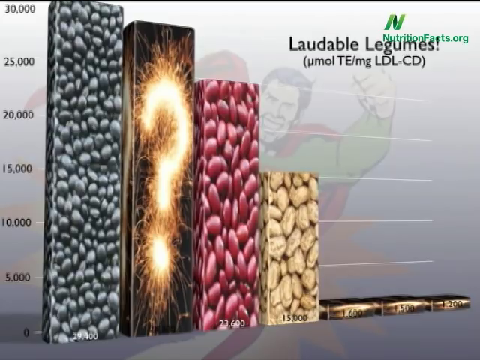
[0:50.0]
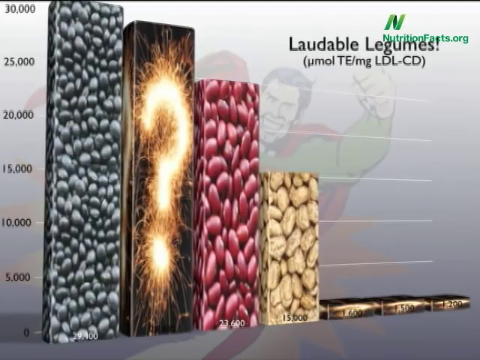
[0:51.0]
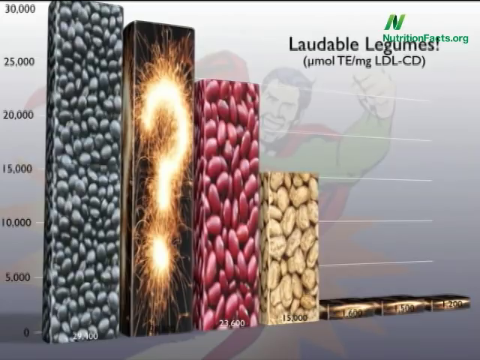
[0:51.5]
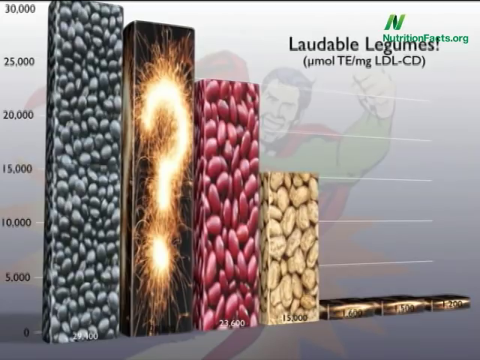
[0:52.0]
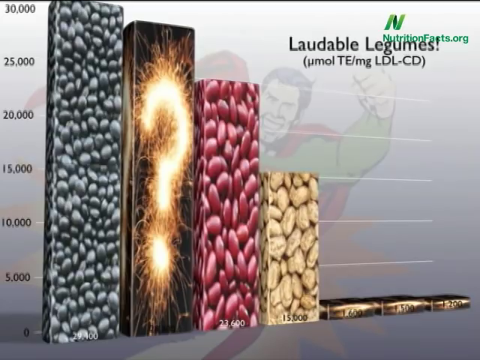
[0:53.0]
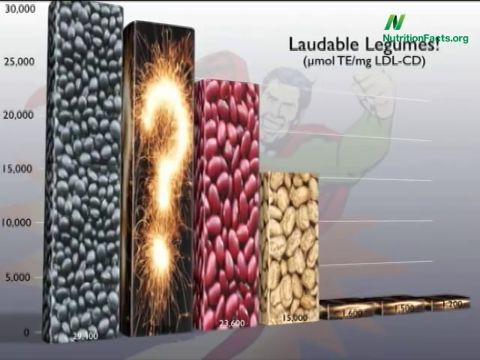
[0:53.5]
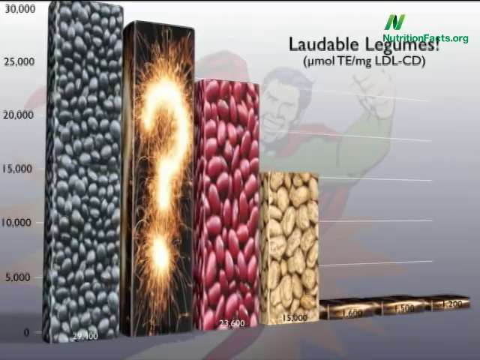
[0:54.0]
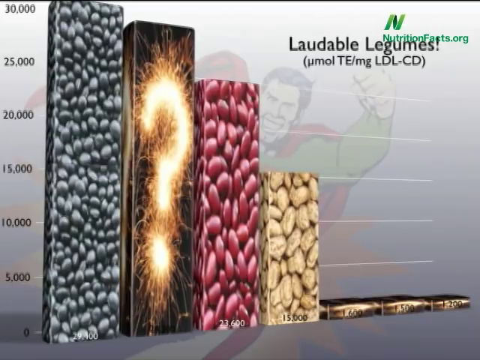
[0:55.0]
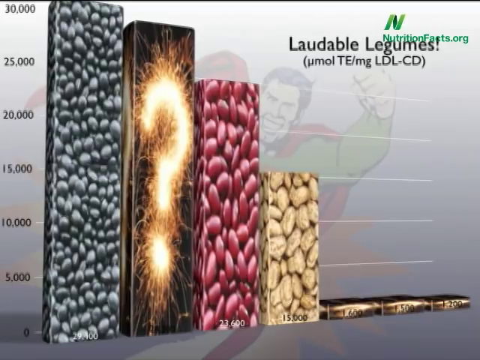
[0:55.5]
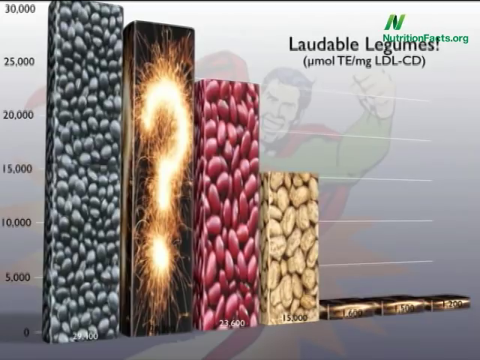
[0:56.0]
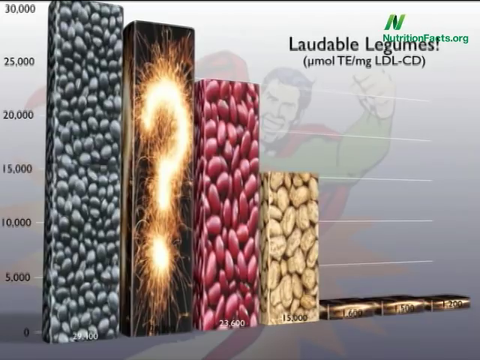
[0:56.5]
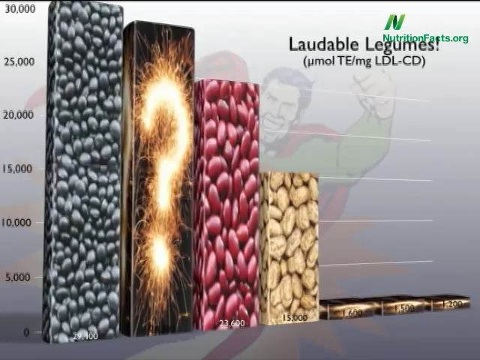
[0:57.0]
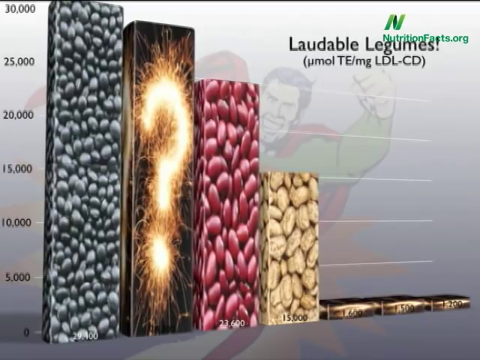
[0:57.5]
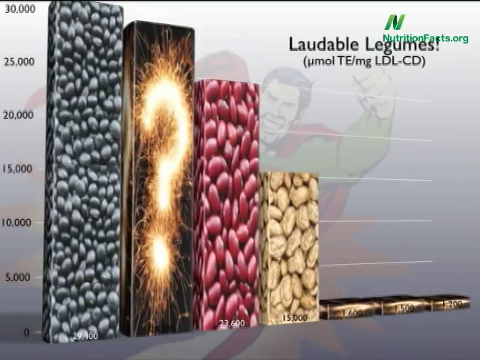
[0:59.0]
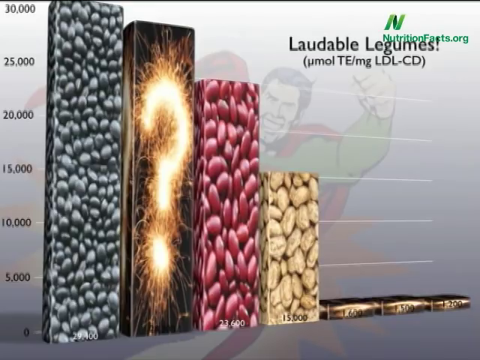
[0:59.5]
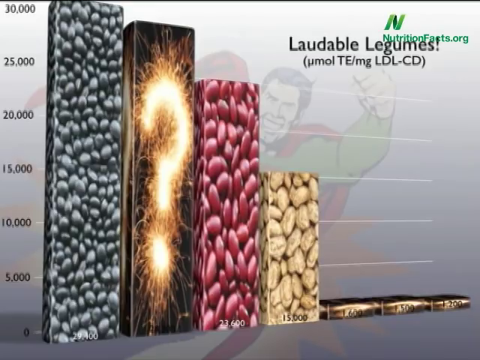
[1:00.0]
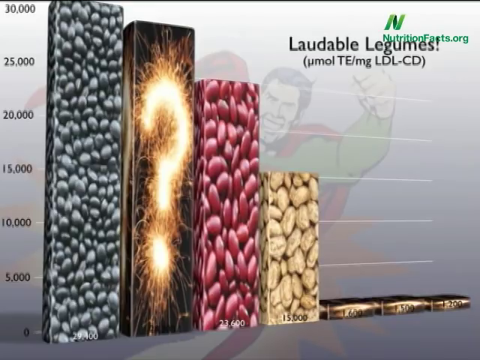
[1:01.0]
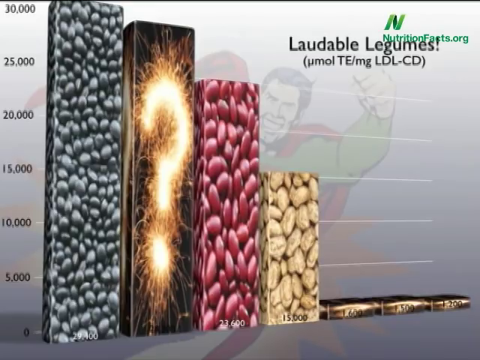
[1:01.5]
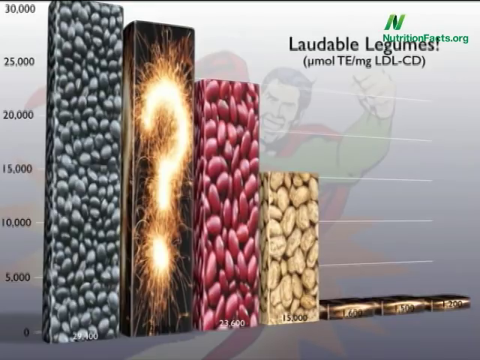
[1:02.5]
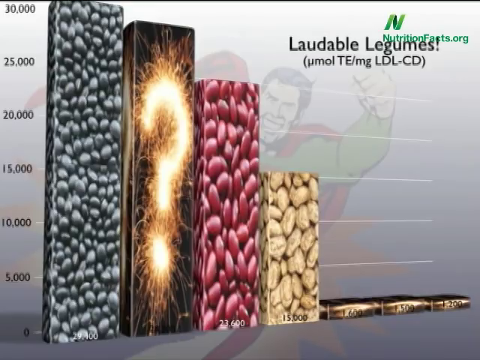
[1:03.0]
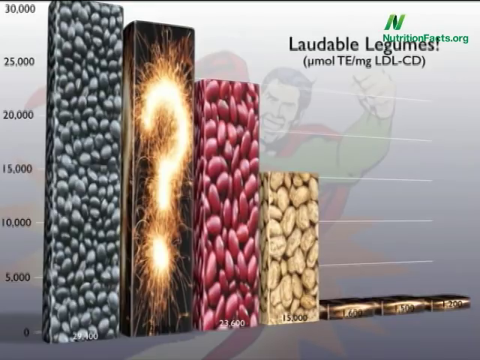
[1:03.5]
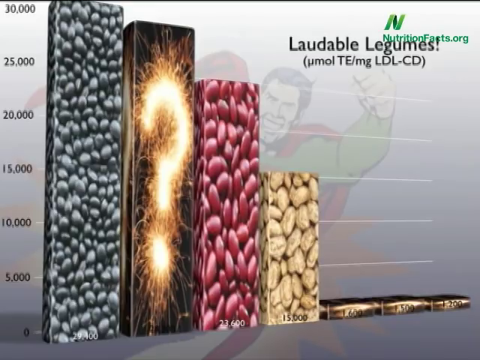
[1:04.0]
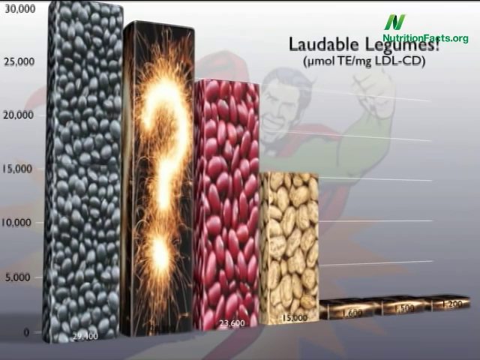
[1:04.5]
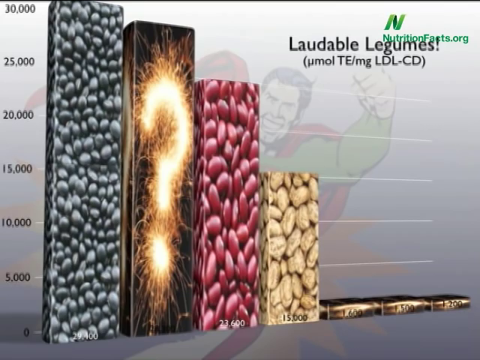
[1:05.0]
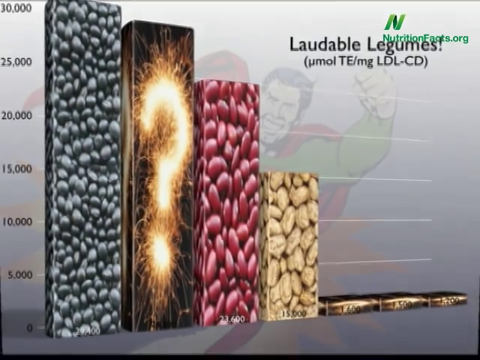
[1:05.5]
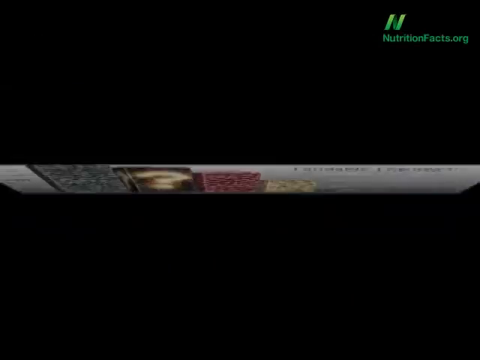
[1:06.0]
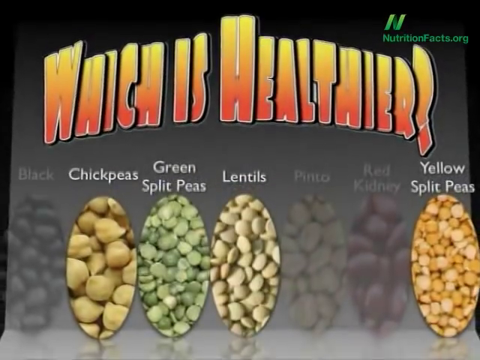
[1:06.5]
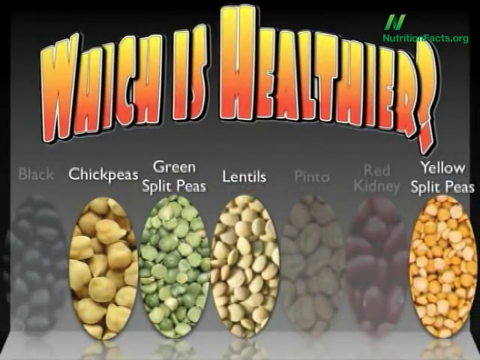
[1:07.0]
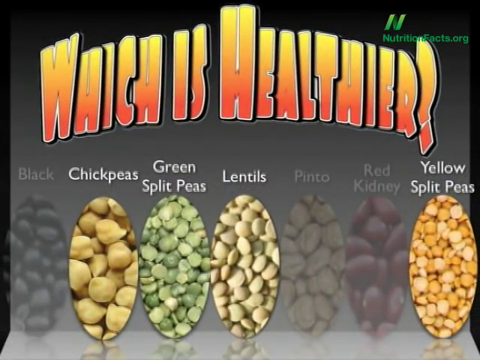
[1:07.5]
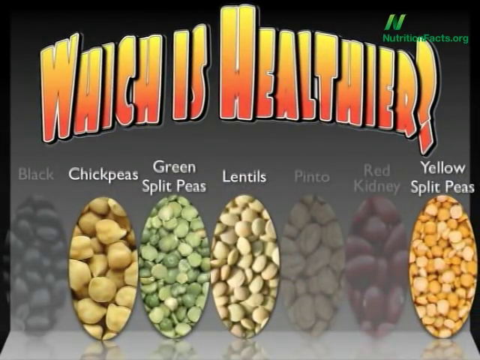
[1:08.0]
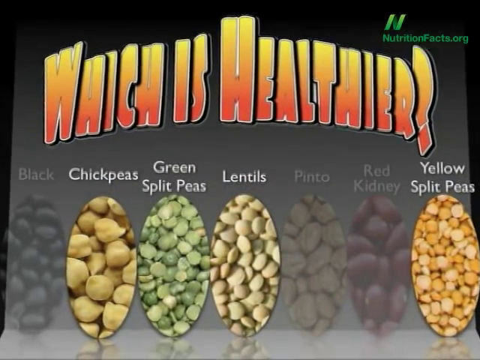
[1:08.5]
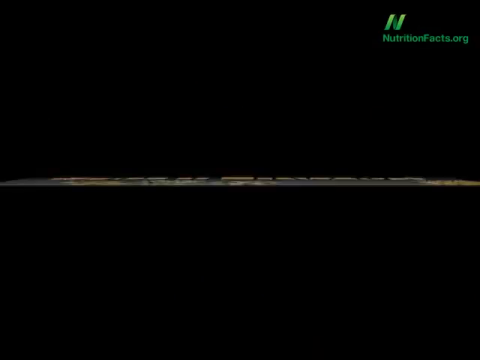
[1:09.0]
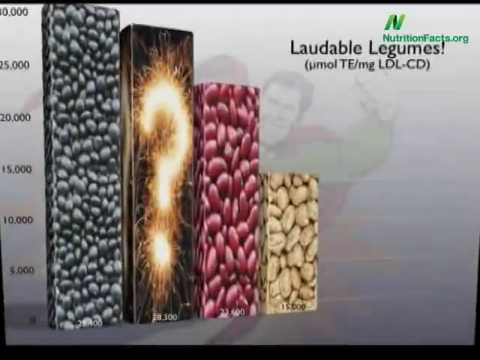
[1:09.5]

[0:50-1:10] The chart with the text "Laudable Legumes" is shown, with the nutritionfacts.org logo on top of it at the top right of the screen. The y-axis is marked in steps of 5,000, and the chart seems to show seven types of beans. The first bar is about 30,000, the second about 28,000, the third about 24,000 and the fourth about 15,000, while the fifth, sixth and seventh are far lower than 5,000. A faintly visible image of a smiling man who looks like Superman appears in the background of the chart. The video then cuts to the screen with the text "Which is Healthier" and seven types of beans. The first, fifth and sixth bean types, black, pinto and red kidney, are greyed out, while the second, third, fourth and seventh, chickpeas, green split peas, lentils and yellow split peas, are much more visible.